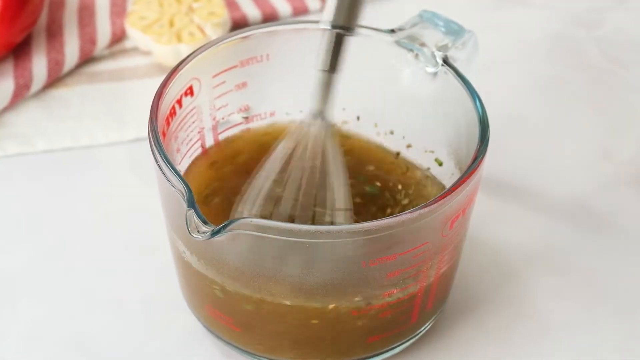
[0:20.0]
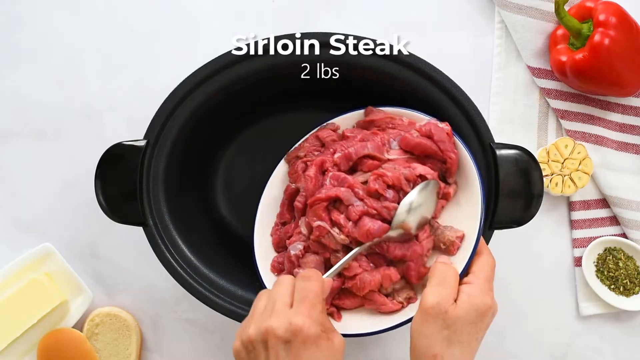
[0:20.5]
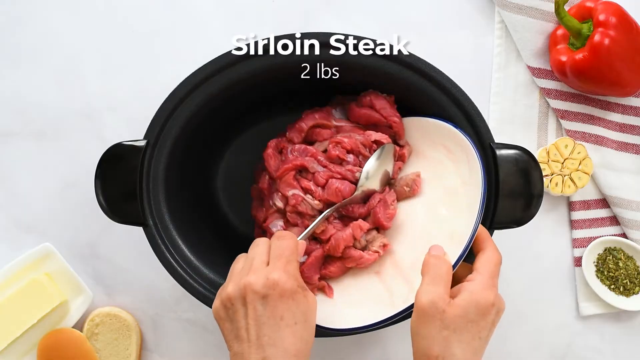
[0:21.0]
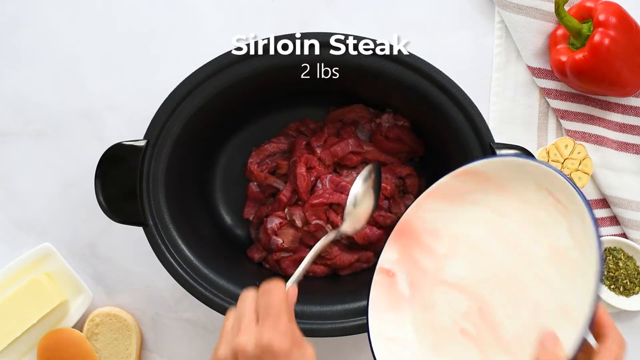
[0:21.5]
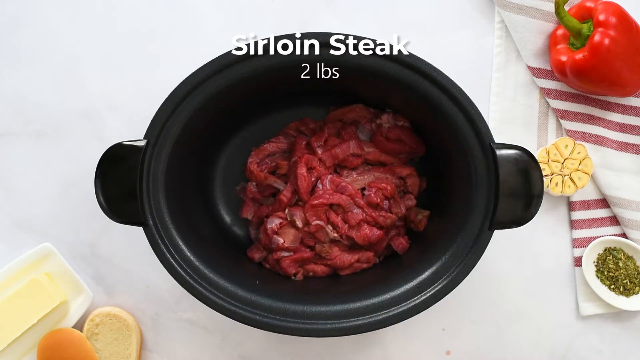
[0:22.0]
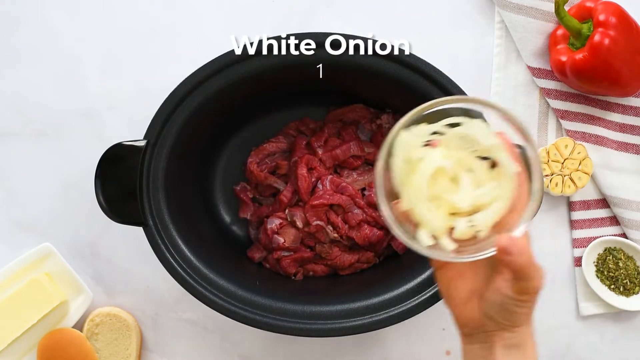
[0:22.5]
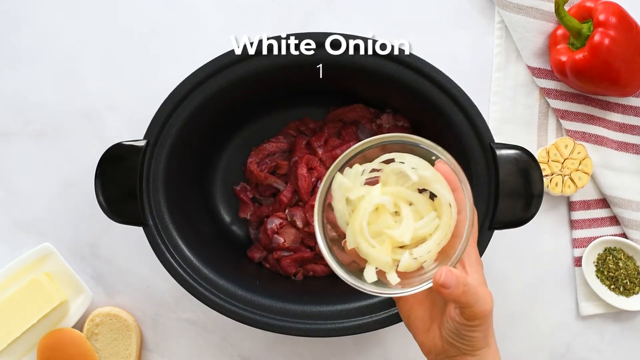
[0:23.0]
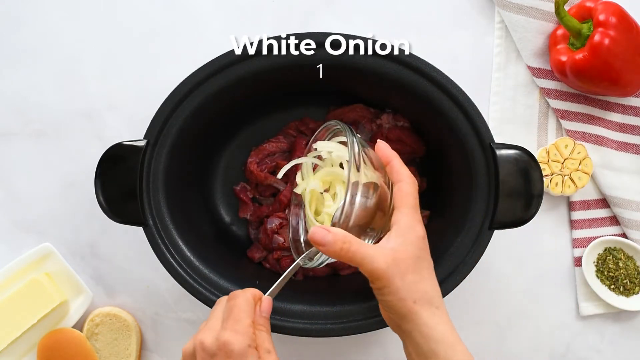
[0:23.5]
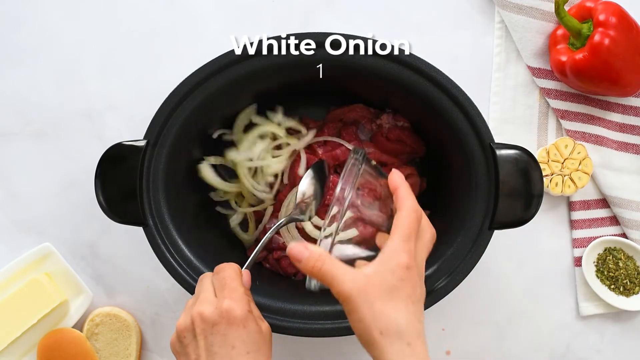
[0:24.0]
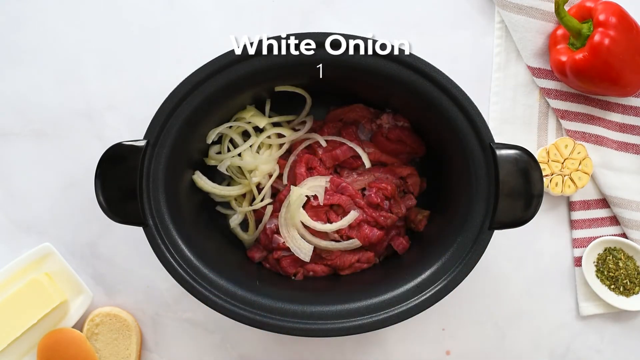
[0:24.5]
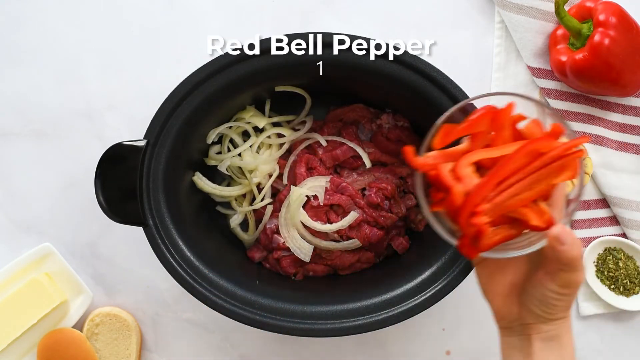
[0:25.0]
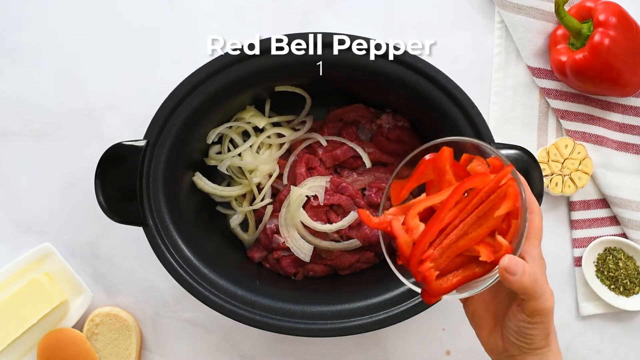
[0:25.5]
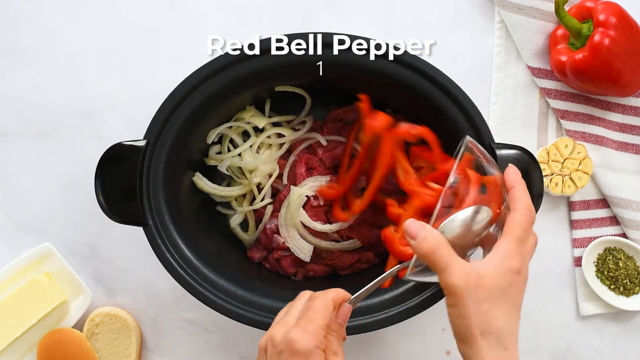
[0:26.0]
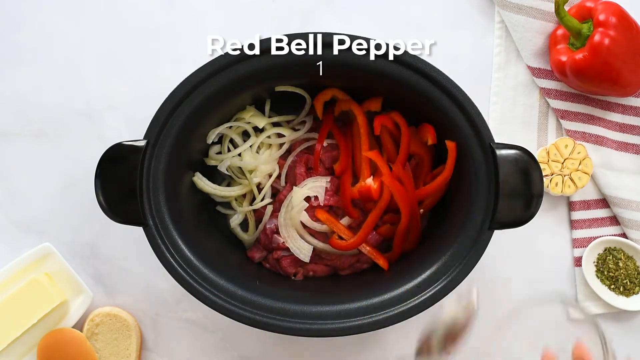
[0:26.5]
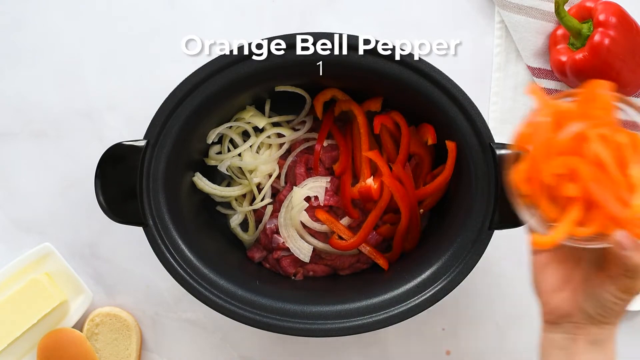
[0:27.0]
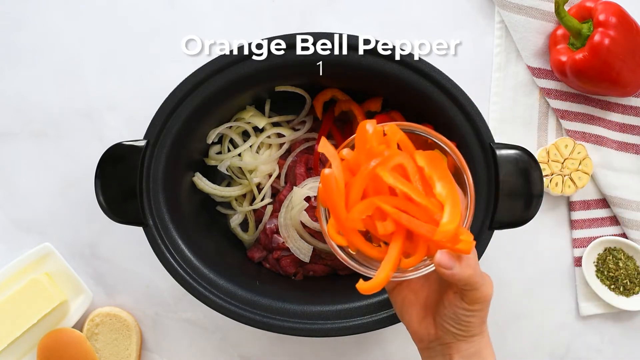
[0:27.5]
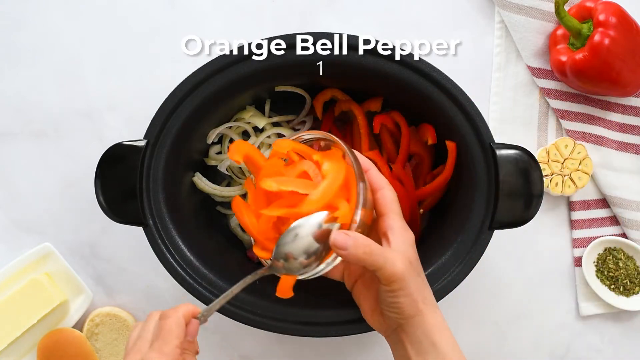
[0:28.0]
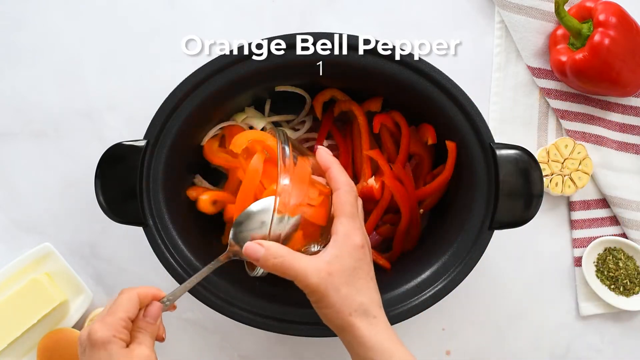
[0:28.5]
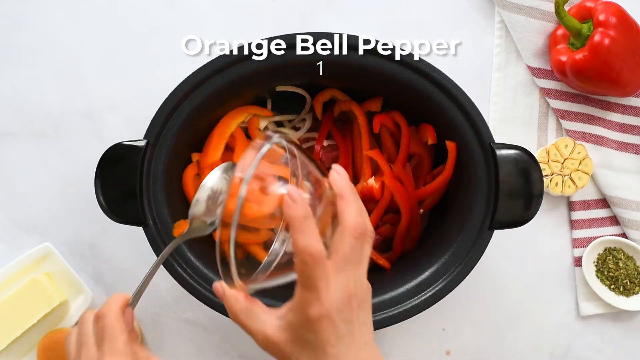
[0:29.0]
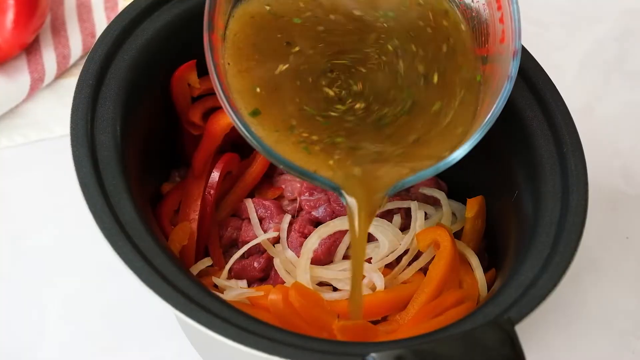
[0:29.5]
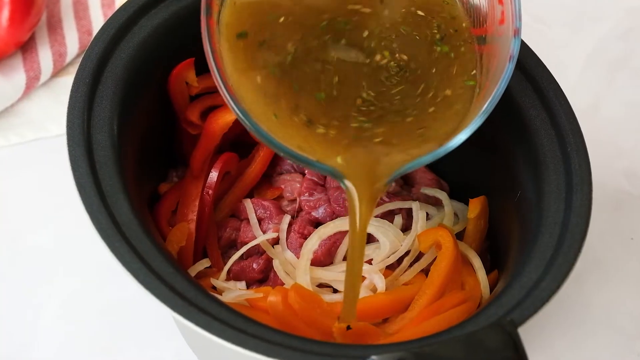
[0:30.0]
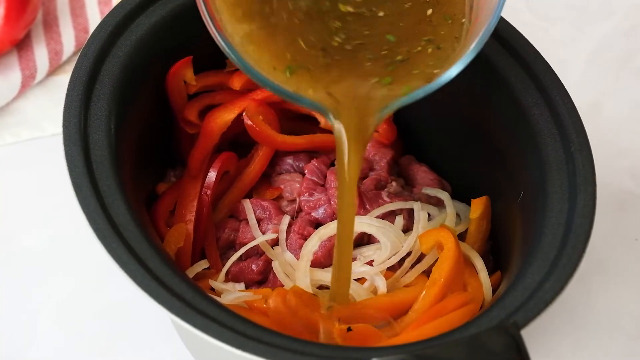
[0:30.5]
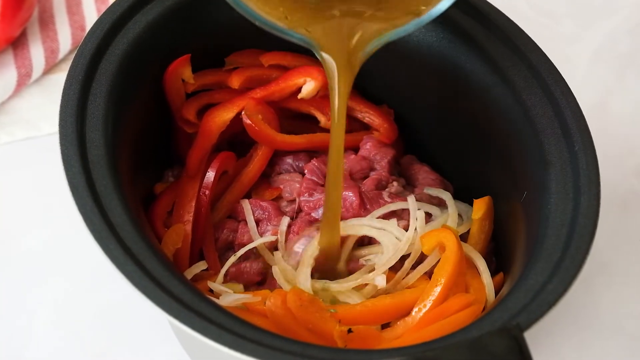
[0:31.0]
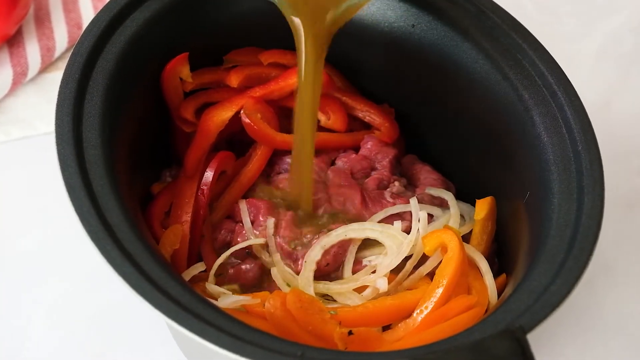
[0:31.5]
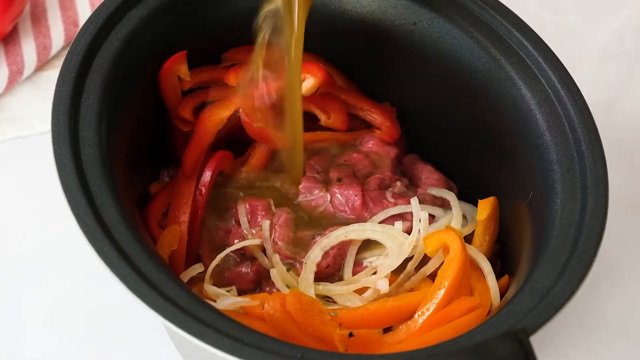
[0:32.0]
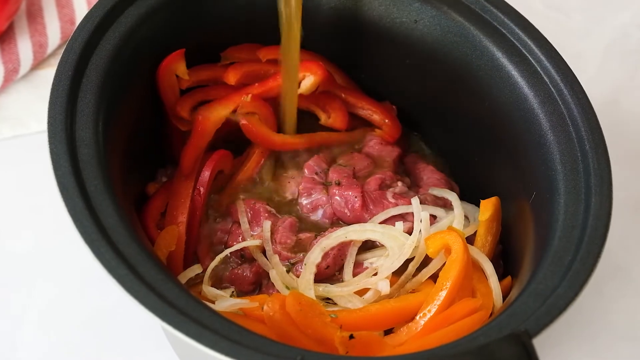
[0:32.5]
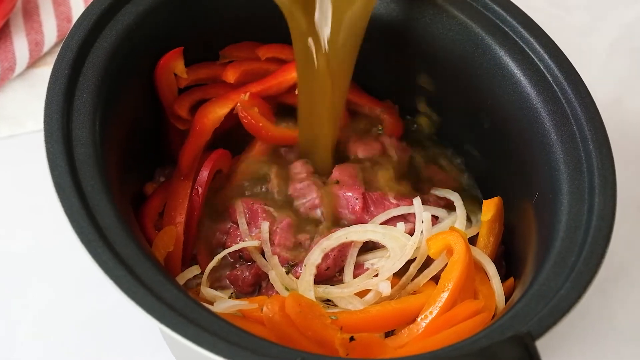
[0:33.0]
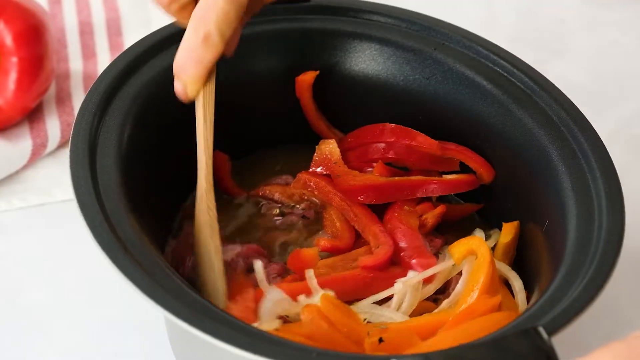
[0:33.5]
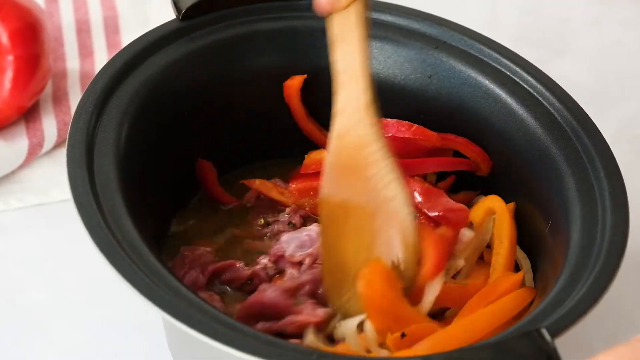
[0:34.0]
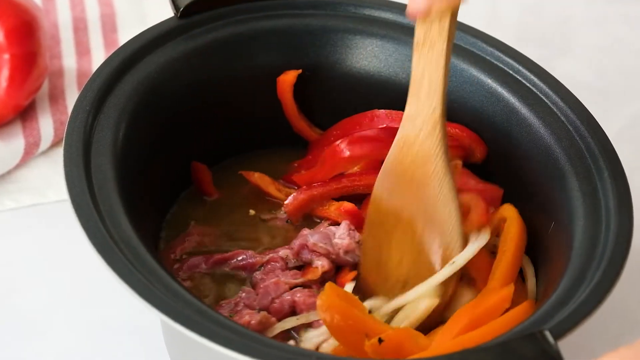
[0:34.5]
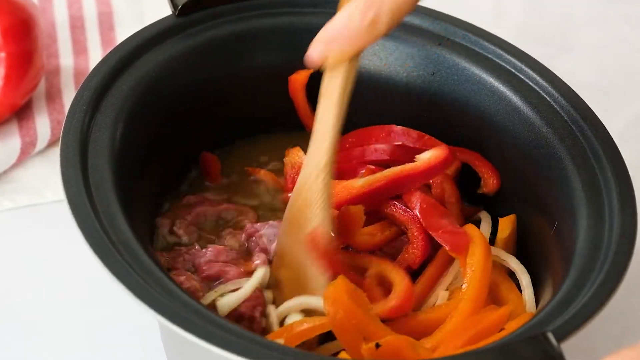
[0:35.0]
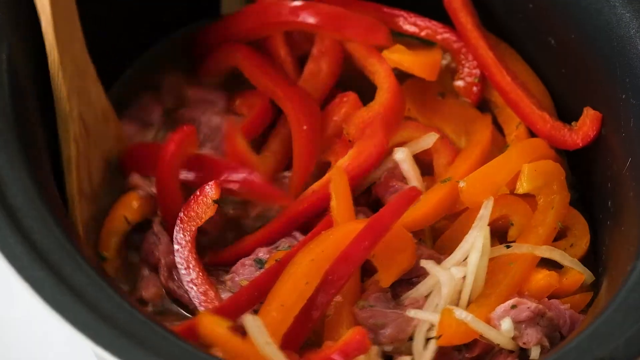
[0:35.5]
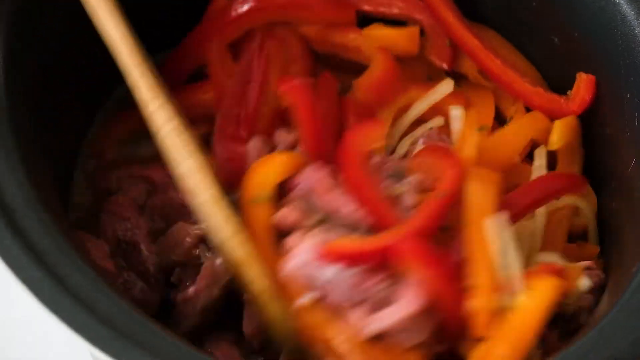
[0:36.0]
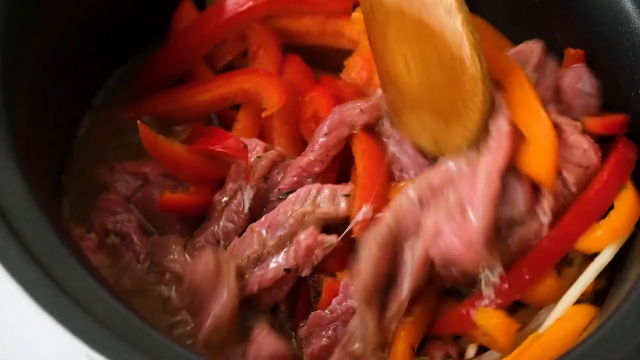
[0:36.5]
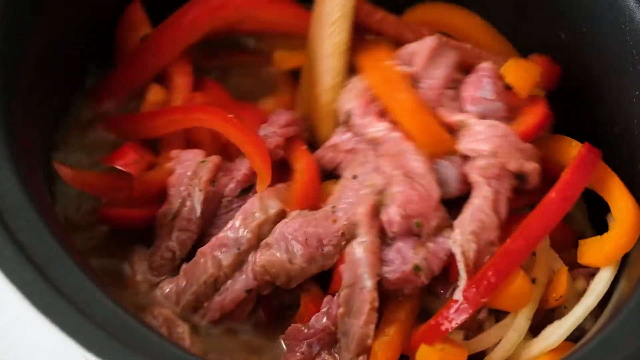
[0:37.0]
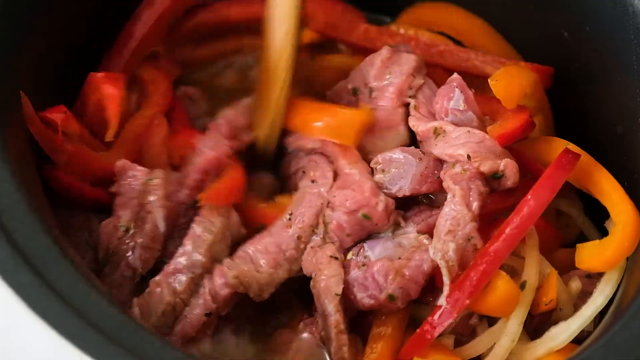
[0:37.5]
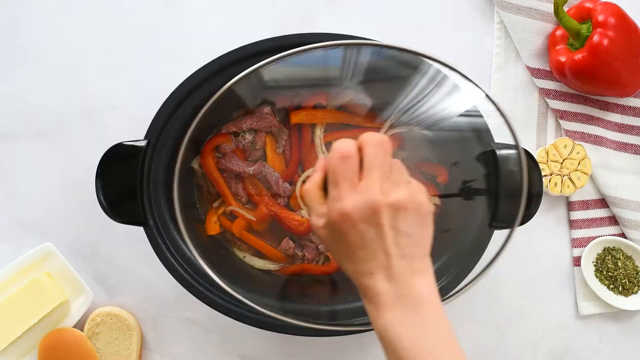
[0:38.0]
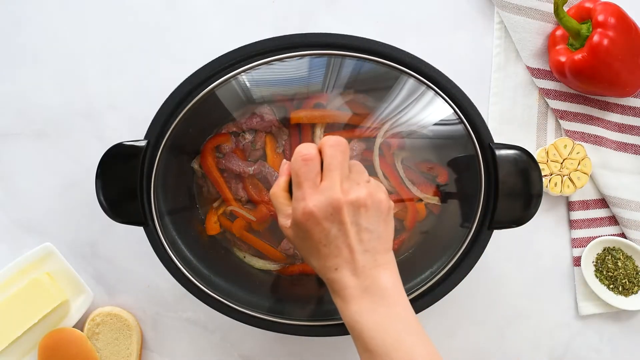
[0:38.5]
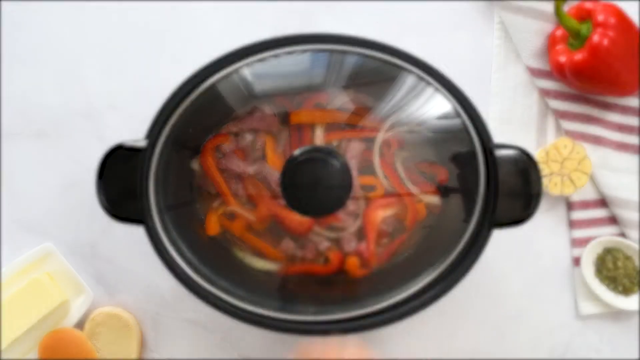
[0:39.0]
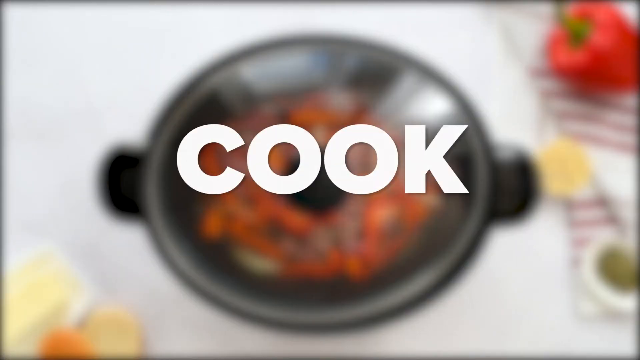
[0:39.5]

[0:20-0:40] A glass measuring cup stands on a table, holding a mixture of water with various herbs and spices, and a whisk is mixing the ingredients. The shot cuts to a top-down view of the table with an empty crock-pot. A pair of hands holds a white plate at the bottom of the frame and slides sirloin steak strips into the crock-pot one by one. Dishes are brought in and added to the crock-pot: first white onion, then red bell pepper, then orange bell pepper. An angled view of the crock-pot shows the herb mixture being poured over everything, followed by a wooden spoon mixing everything together. In a top-down view of the crock-pot, a glass lid is placed over the top, and the camera blurs as text pops up in the middle reading "Cook".